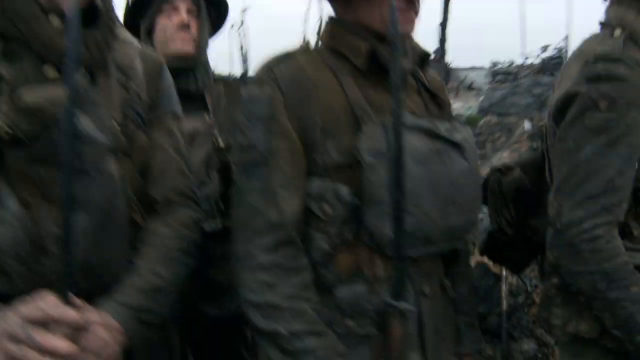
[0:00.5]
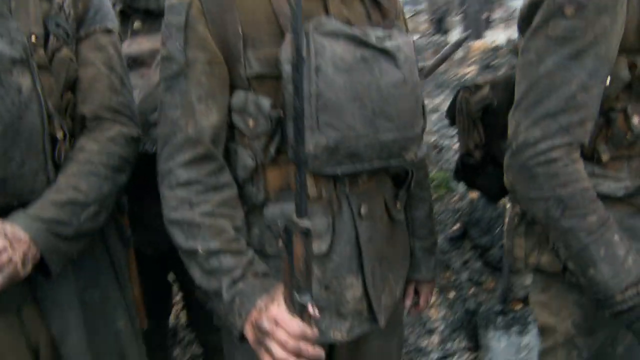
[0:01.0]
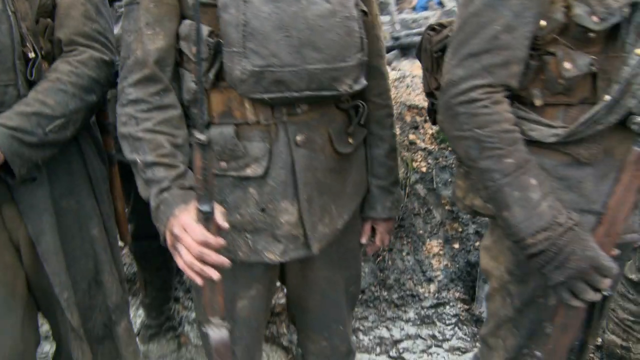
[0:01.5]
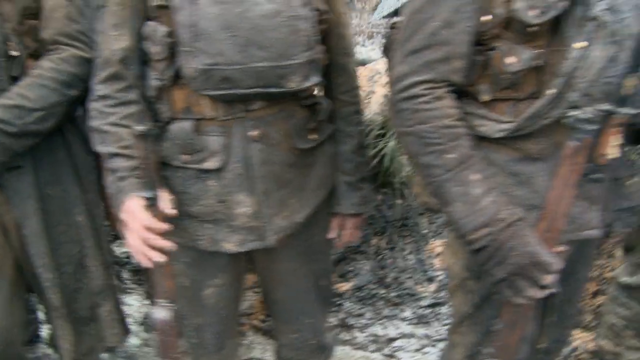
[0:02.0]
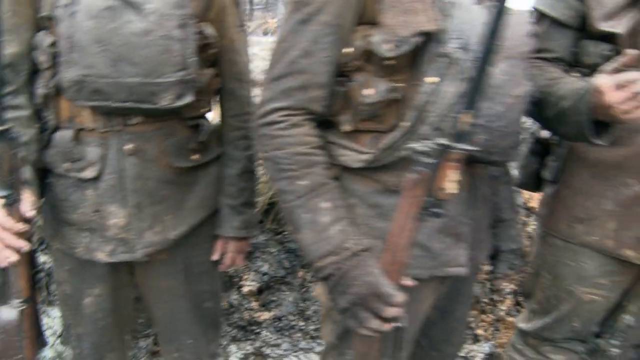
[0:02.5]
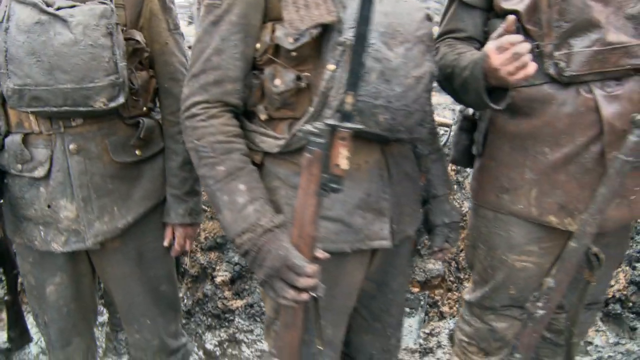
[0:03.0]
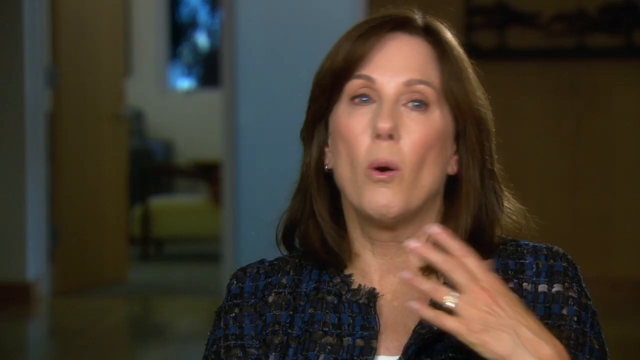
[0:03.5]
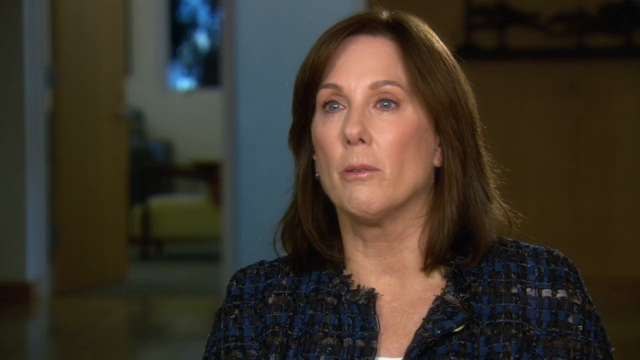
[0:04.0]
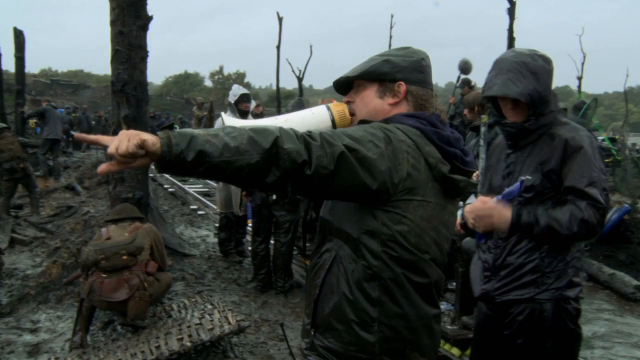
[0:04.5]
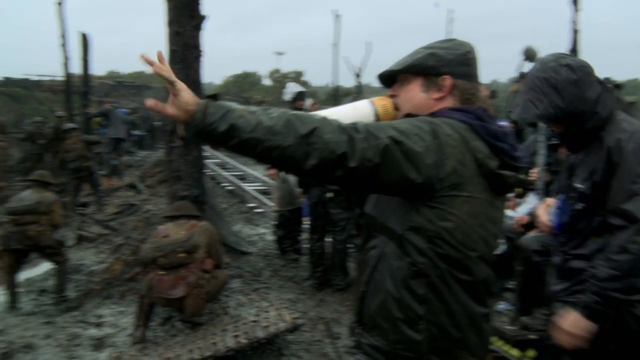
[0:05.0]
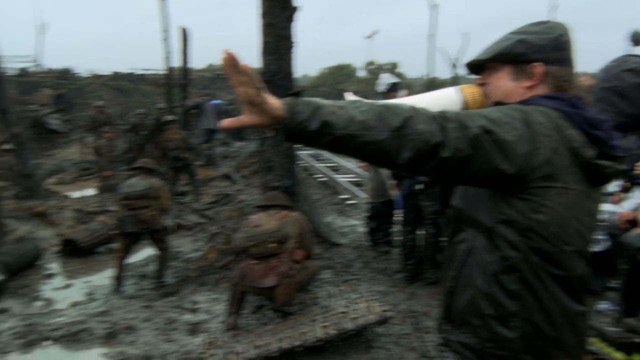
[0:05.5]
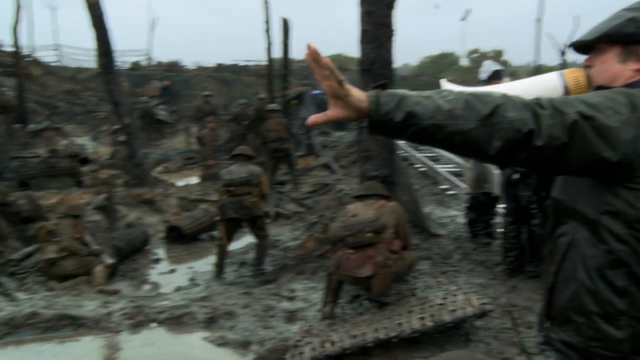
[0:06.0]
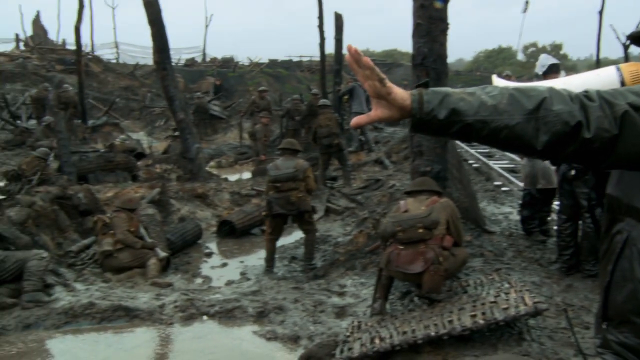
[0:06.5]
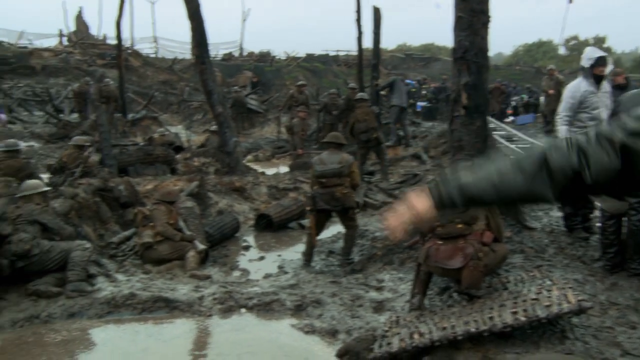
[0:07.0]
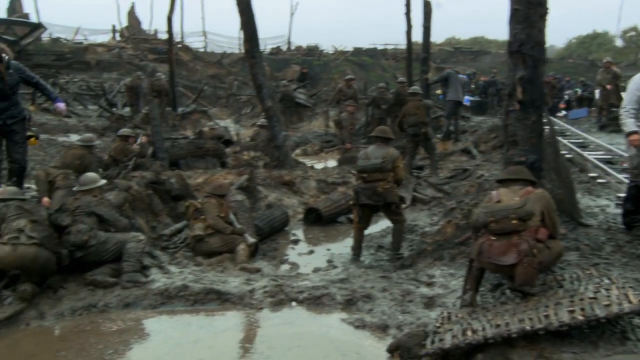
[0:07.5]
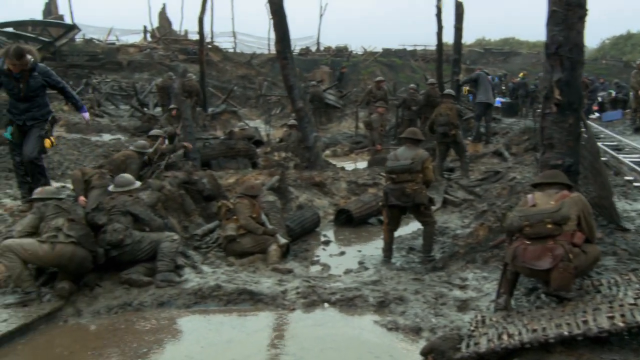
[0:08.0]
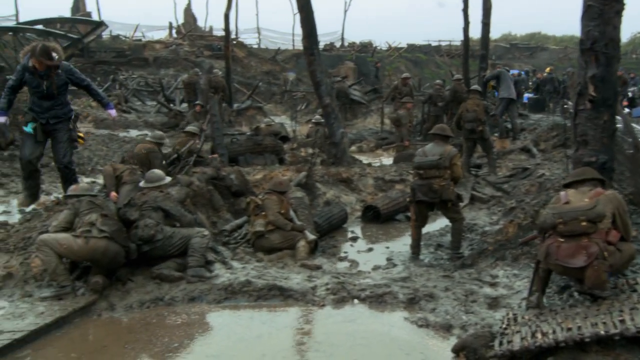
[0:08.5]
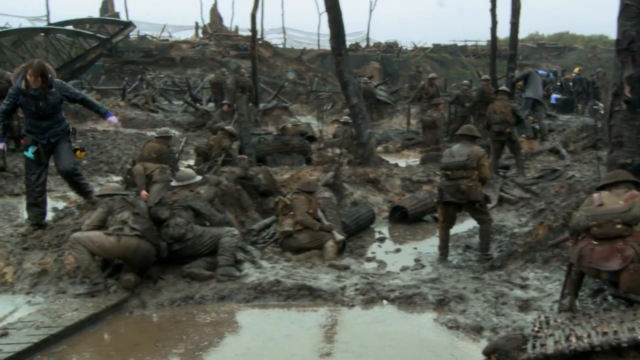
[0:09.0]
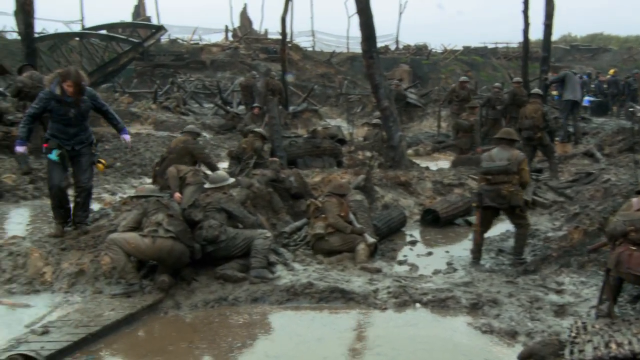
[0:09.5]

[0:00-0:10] This is war footage, and it is unclear which battle it is from; it seems it might possibly be movie footage or a reenactment. Soldiers in dirty uniforms are standing in a very rocky-looking area. The shot cuts to a woman positioned a little toward the right side of the frame. She appears to be in her 50s, possibly 60s, has brown hair, and wears a loud black and blue patterned jacket. Toward the right side, a man in an olive-colored jacket holds a megaphone and seems to be directing the people assembled. The area is very muddy, with a lot of debris strewn everywhere and muddy water all over. The camera pans over the scene, and off to the left there is possibly a film crew member who looks like they have on purple gloves and a utility-belt-type item.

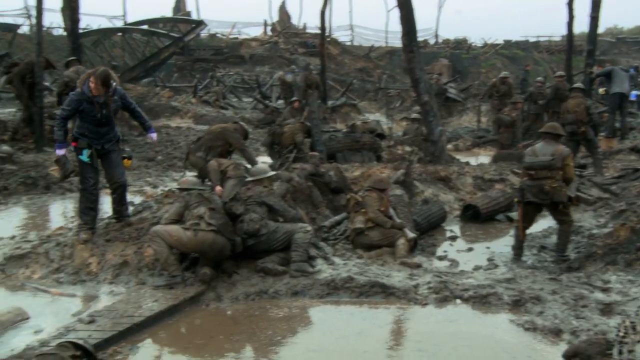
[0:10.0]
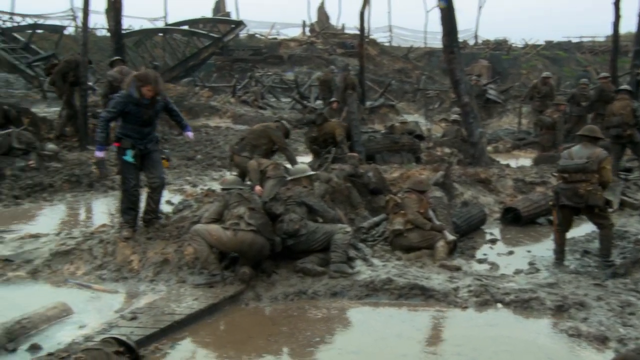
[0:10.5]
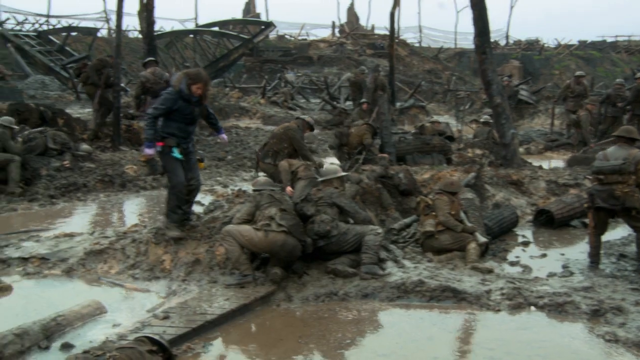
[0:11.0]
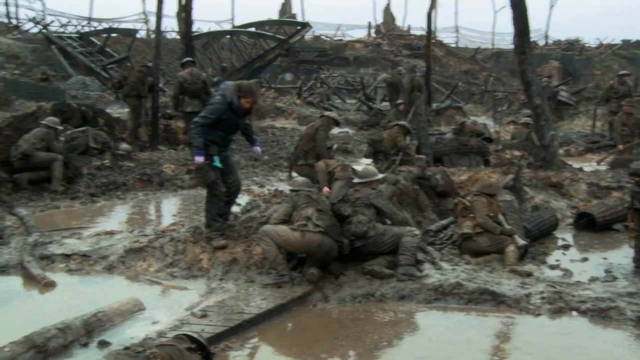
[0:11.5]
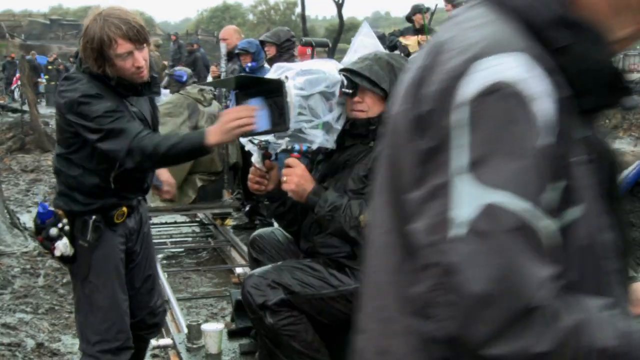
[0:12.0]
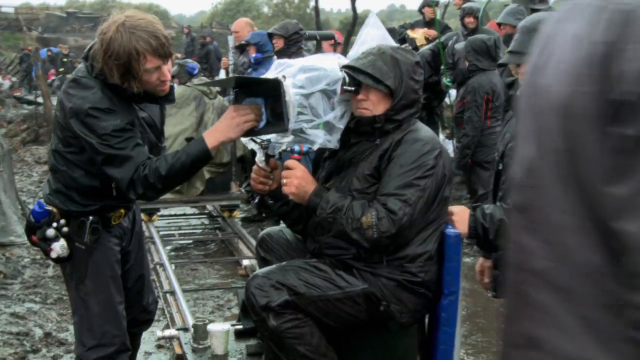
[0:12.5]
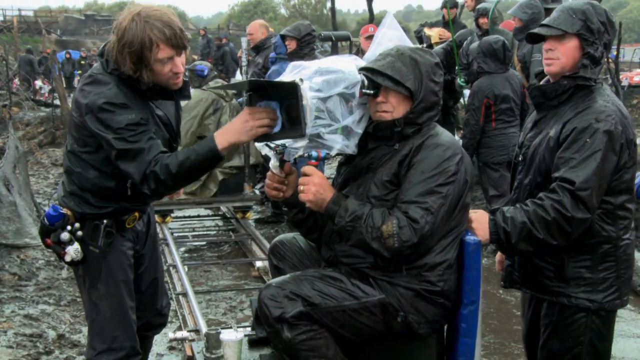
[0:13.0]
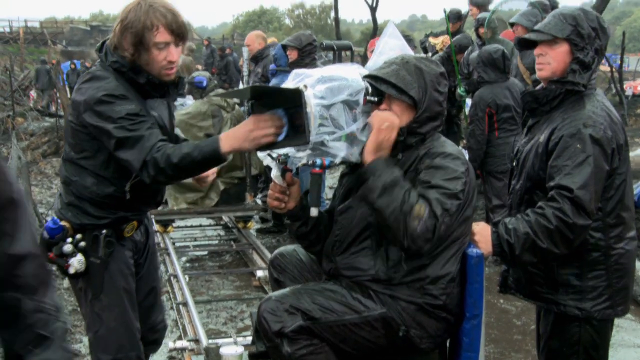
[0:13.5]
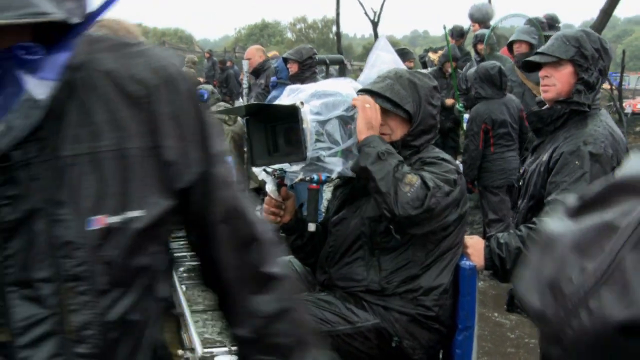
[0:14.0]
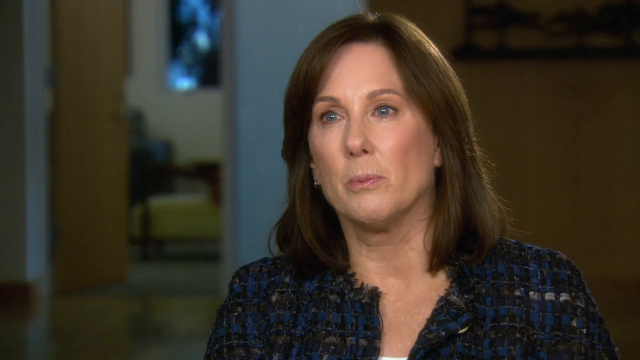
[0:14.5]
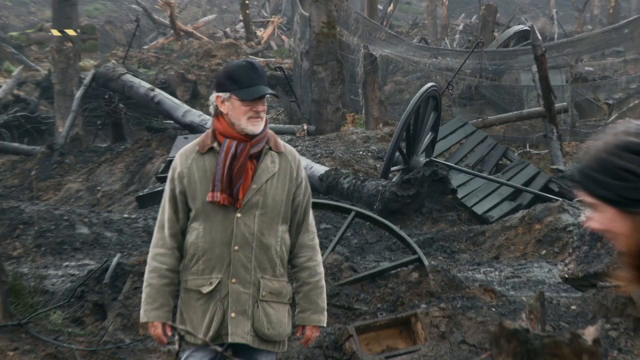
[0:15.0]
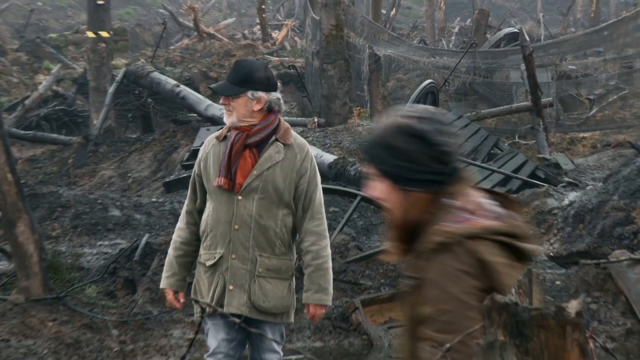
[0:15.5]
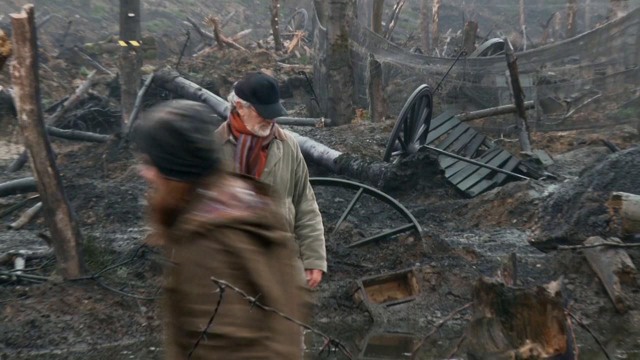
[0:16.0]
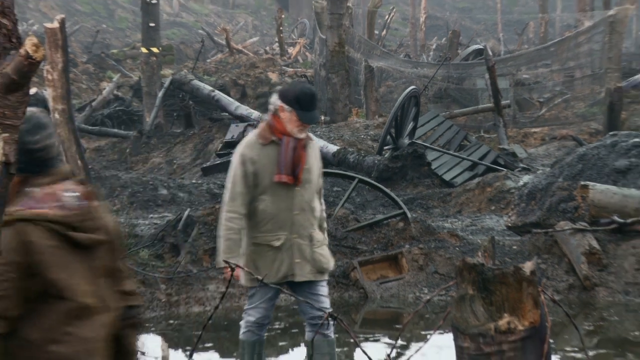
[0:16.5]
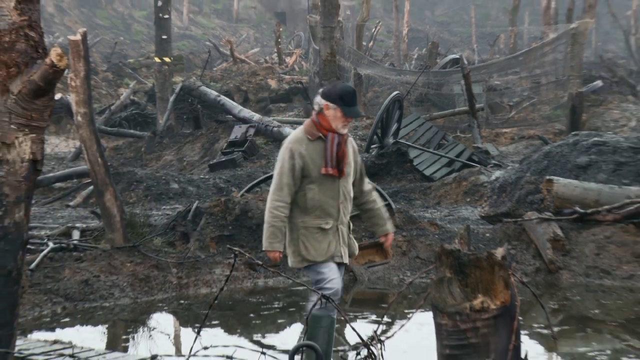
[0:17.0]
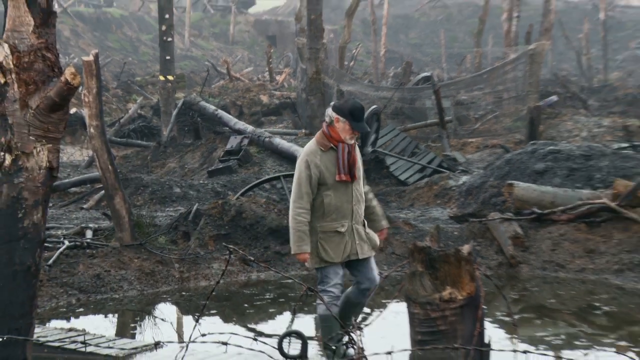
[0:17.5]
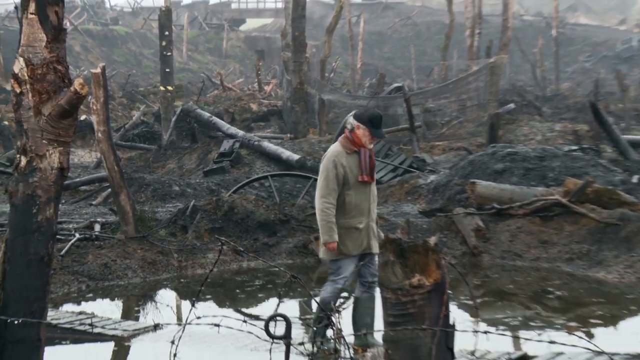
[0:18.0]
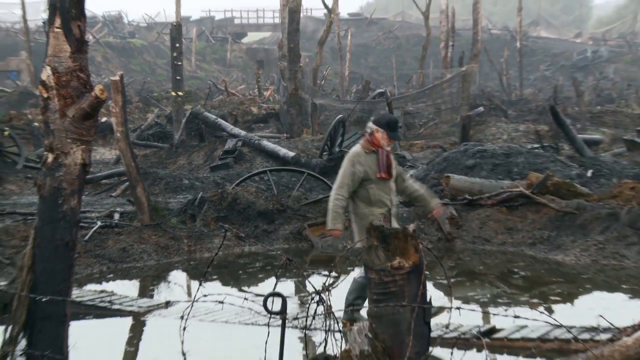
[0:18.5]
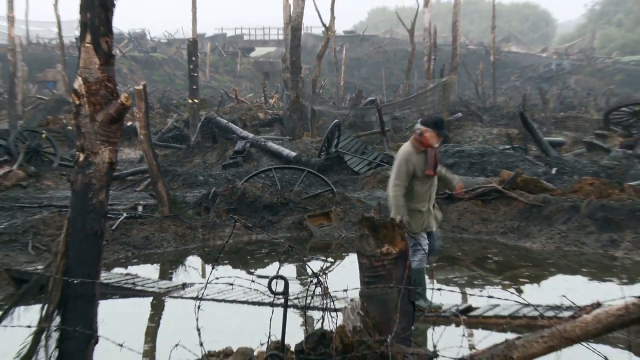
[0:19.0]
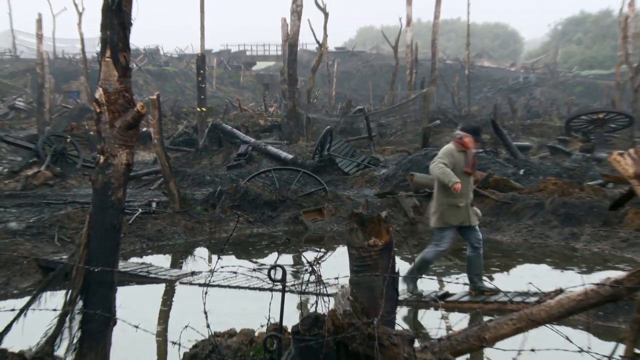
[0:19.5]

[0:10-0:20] The footage is almost certainly from a documentary, movie or television production, showing a battle scene being filmed. Camera operators and a dolly track are visible. Toward the left side, a man in a black jacket wearing utility tool belts wipes condensation off a camera, with a lot of crew members in raincoats behind him. The shot cuts to a woman with brown hair in a loud black and blue patterned jacket; she is in her fifties and seems to be being interviewed. It then cuts to a man who looks like Steven Spielberg, and this appears to be behind-the-scenes footage from one of his movies. He appears to be wearing an olive-colored jacket, along with a scarf and a baseball cap, and walks through the muddy wreckage of the fake battle scene. Barbed wire and a lot of burnt-out debris are in the background.